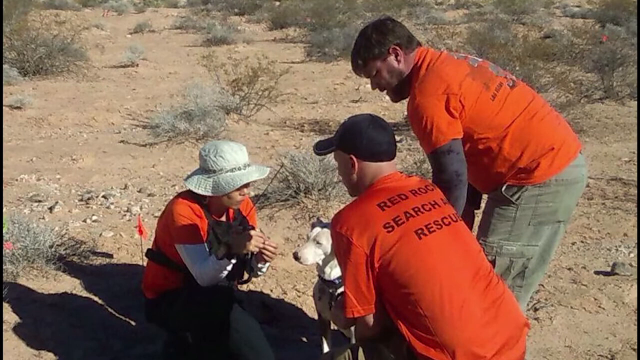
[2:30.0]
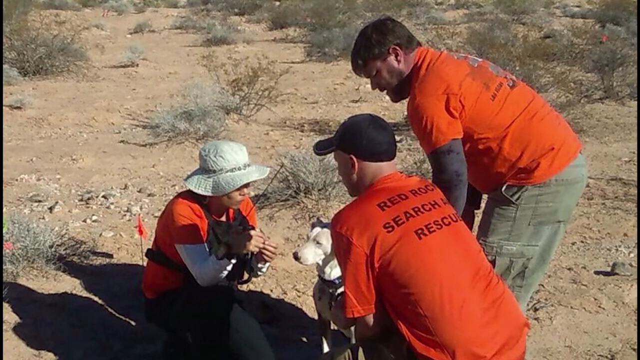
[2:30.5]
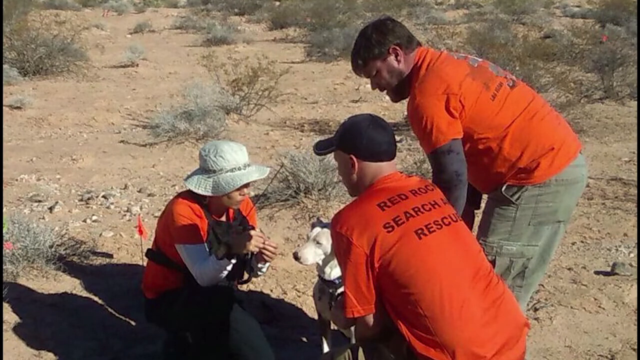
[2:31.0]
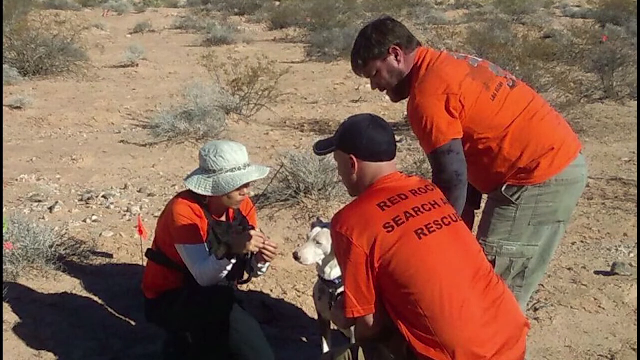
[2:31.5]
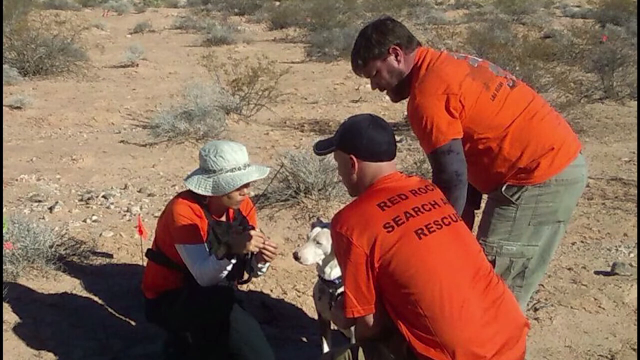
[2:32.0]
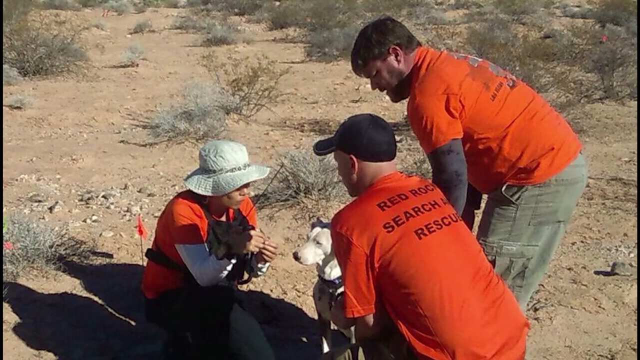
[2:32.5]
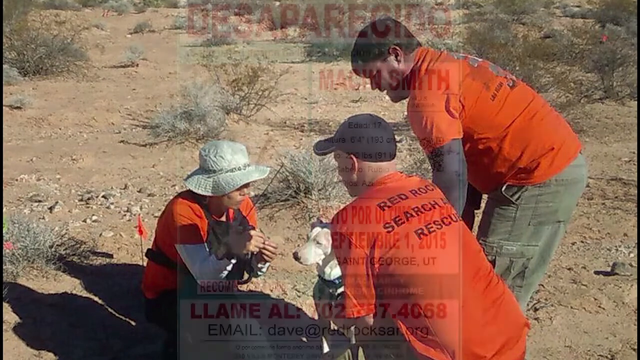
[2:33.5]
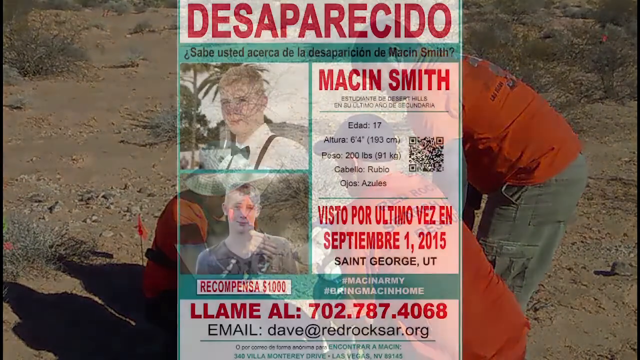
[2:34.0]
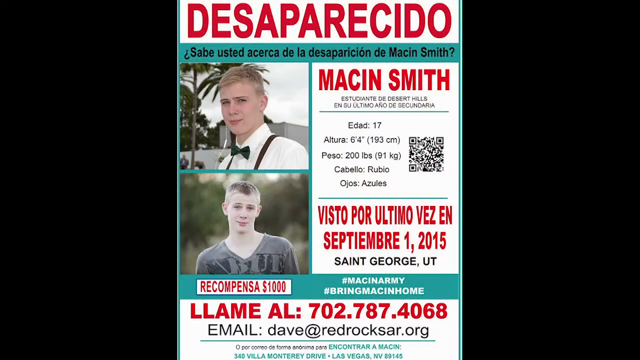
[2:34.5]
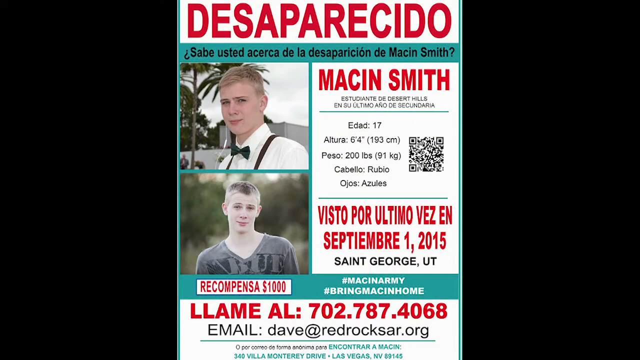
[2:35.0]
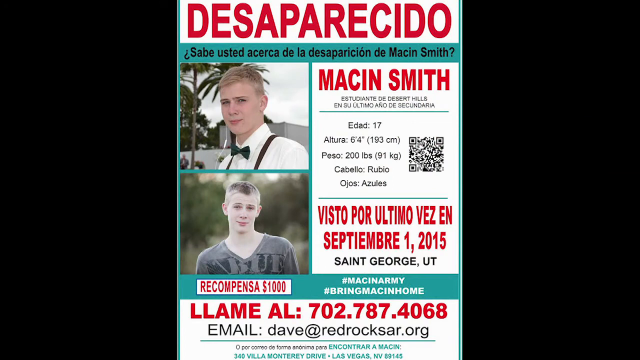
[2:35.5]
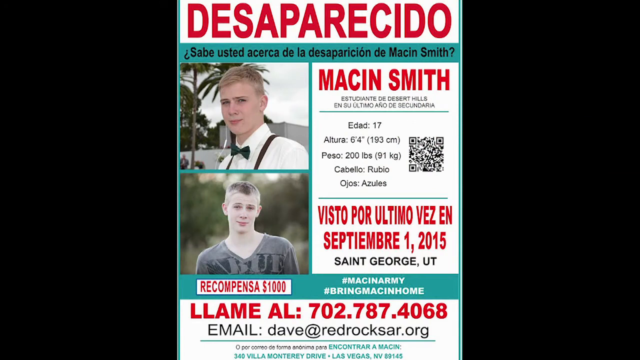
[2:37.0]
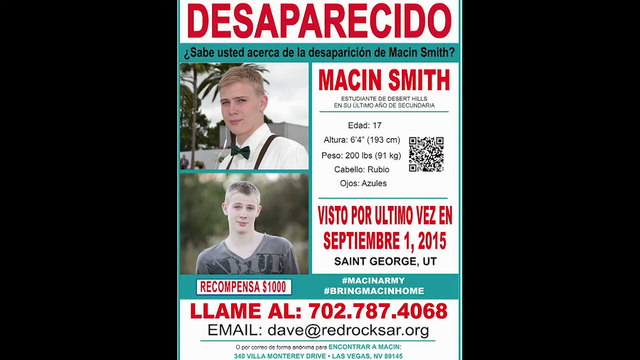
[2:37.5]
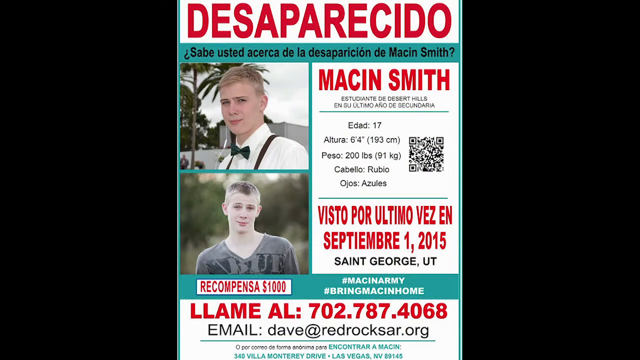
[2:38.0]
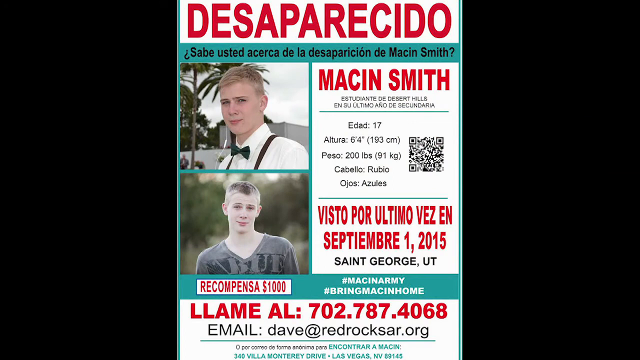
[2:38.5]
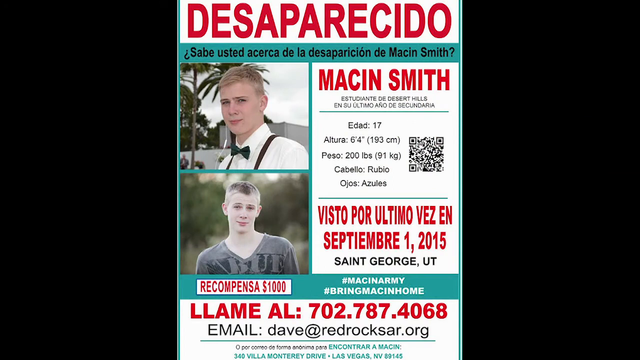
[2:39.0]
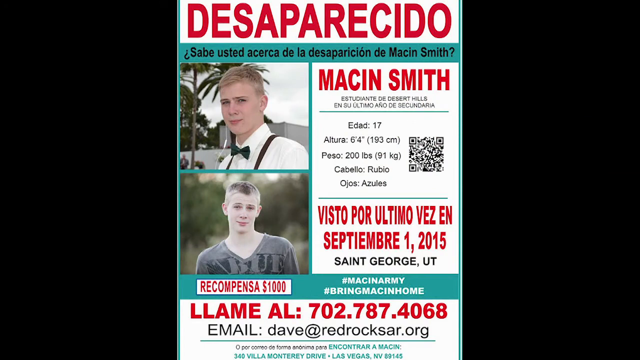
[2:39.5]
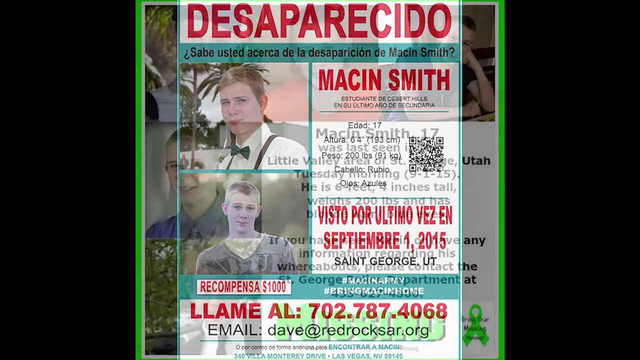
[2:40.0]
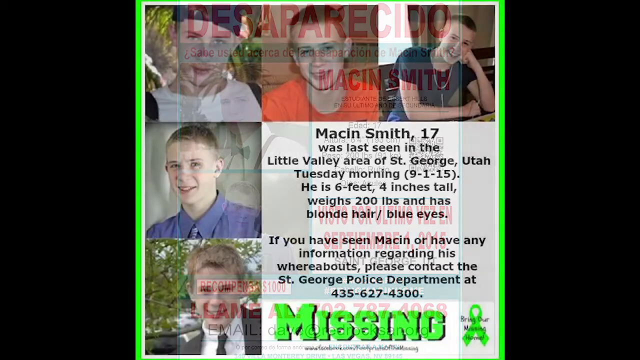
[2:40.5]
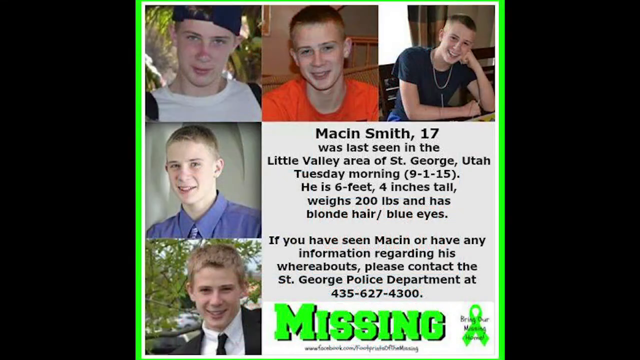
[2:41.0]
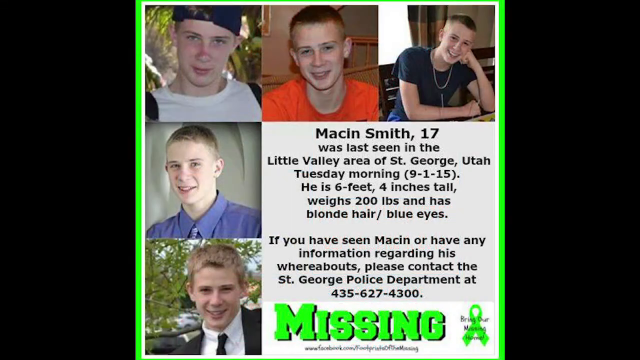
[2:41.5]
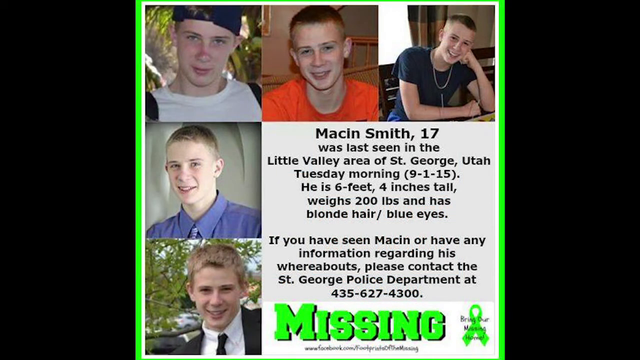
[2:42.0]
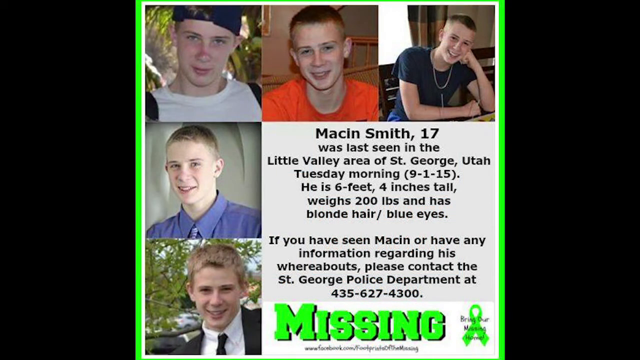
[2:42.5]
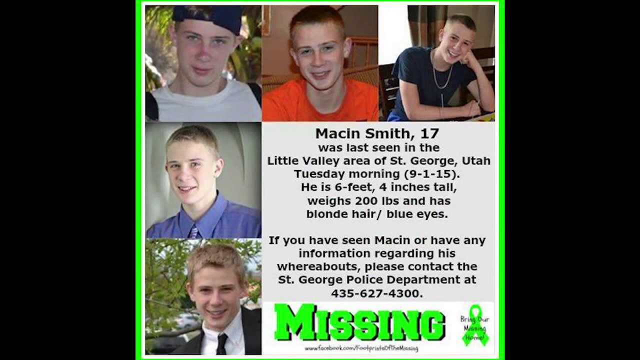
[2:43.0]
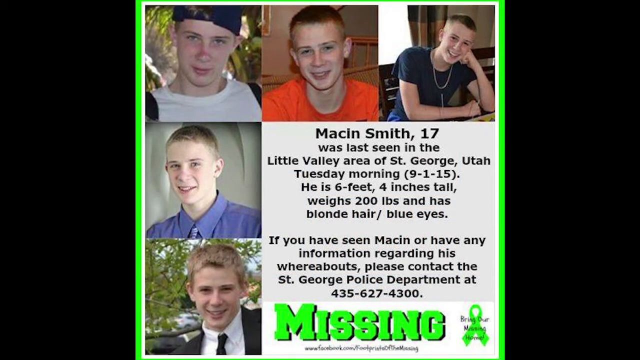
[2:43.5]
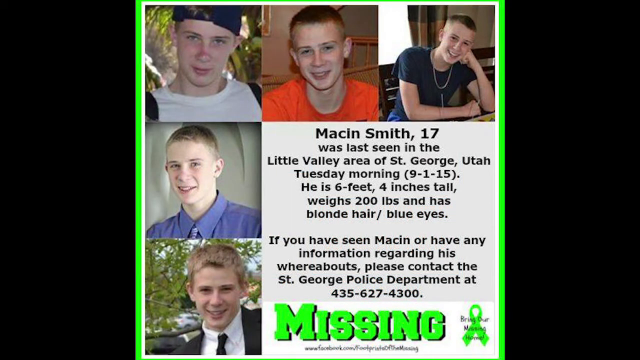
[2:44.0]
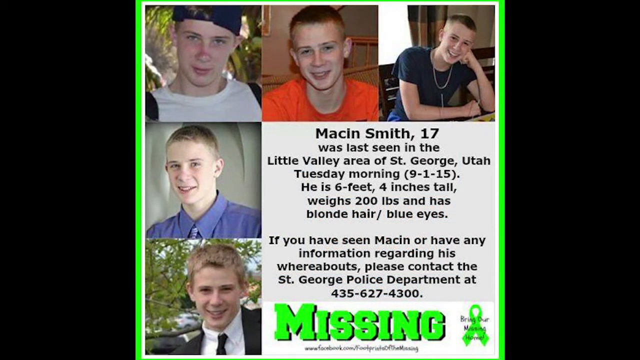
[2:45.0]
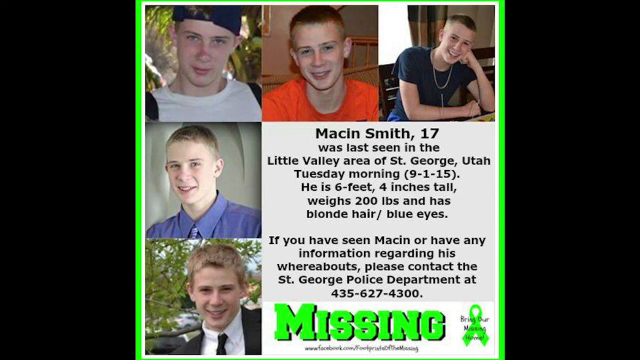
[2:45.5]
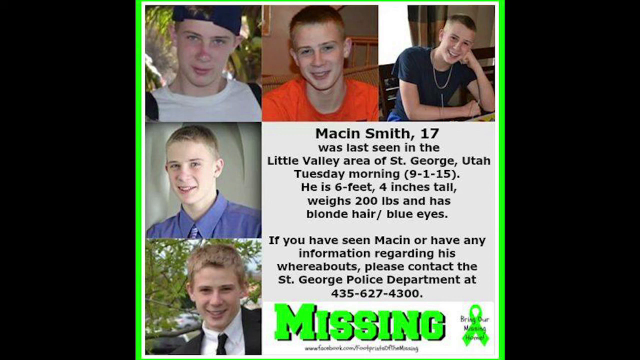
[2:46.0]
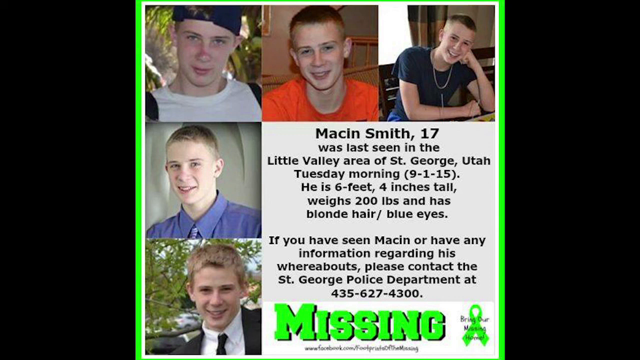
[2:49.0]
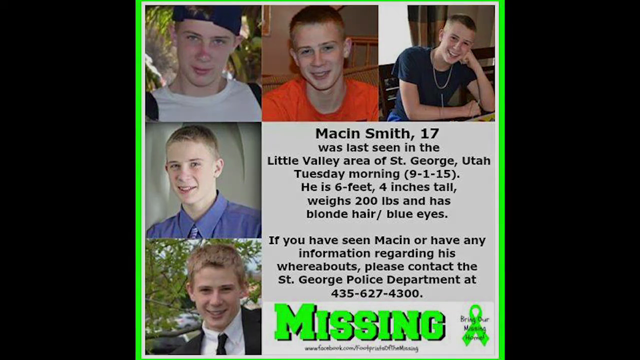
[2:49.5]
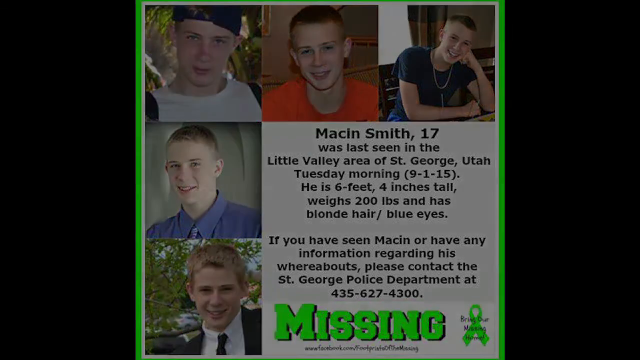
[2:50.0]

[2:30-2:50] The three search and rescue people are crouched on the ground in the desolate landscape of the Utah desert, and a dog stands between them. A Spanish poster for Macin Smith follows, headed "Desparacido." It asks whether anyone has seen someone matching the description: aged 17, height 193 centimeters, weight 91 kilos, red hair and blue eyes, with a picture of Makin Smith. It mentions St. George, Utah and September 1st, and hashtags "MacinArmy" and "BringMacinHome" appear at the bottom. The poster remains on screen. The view then zooms in on another missing poster stating that Macin was last seen in the Little Valley area of St. George, Utah, on Tuesday morning. This poster stays on screen with a black letterbox on either side as the video ends.